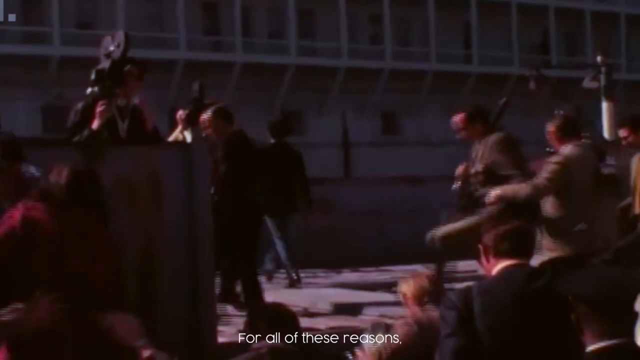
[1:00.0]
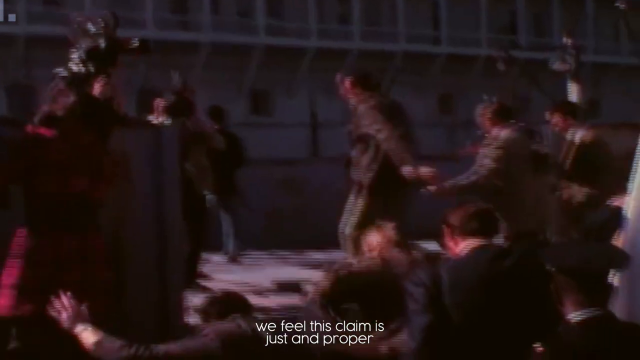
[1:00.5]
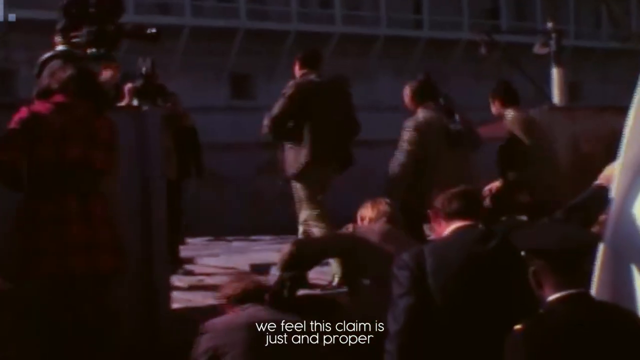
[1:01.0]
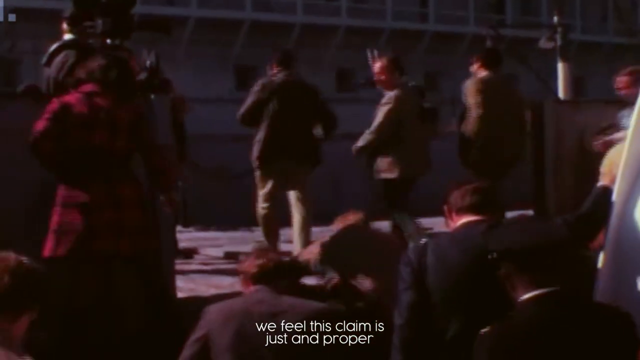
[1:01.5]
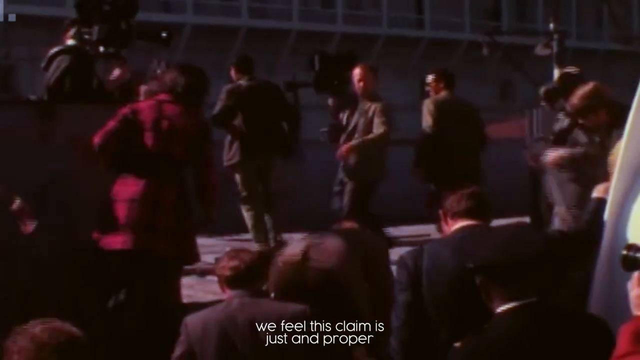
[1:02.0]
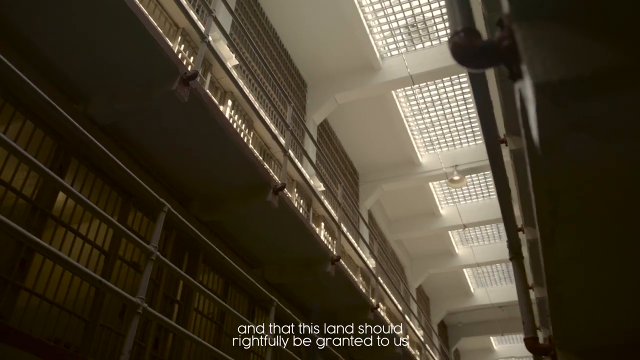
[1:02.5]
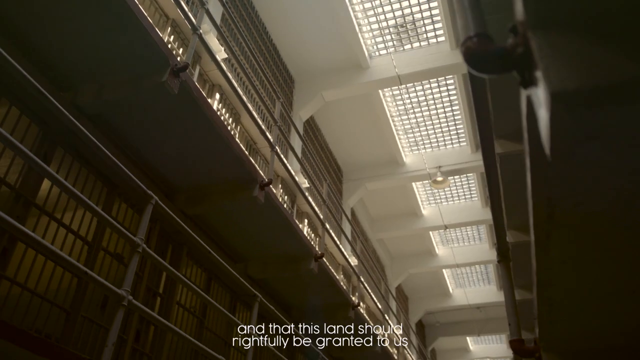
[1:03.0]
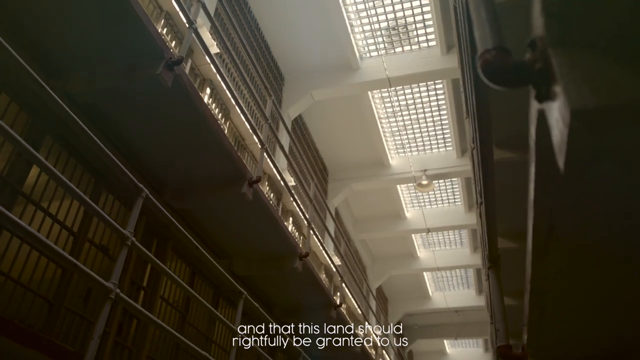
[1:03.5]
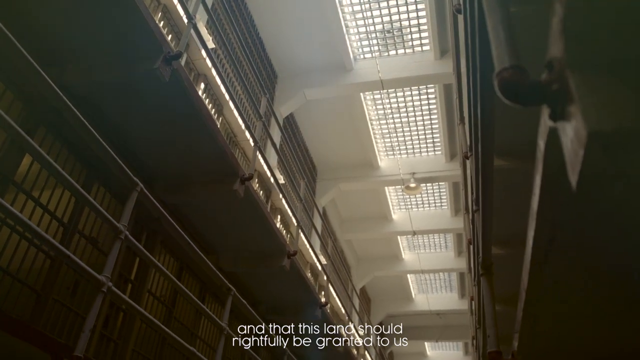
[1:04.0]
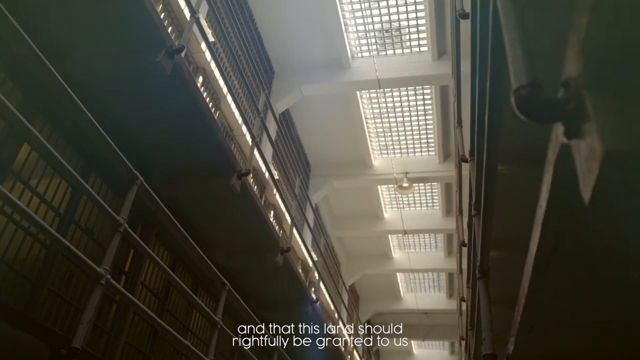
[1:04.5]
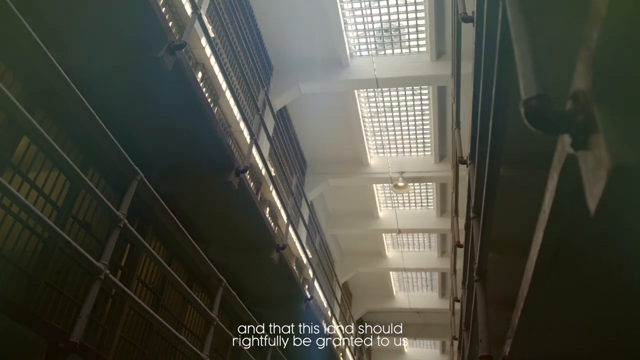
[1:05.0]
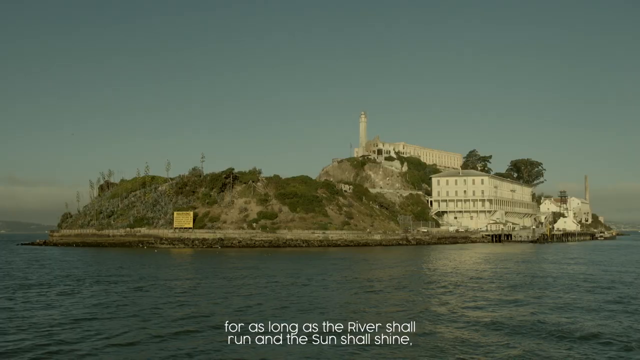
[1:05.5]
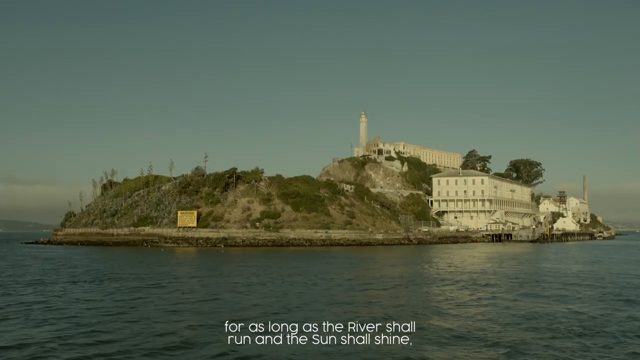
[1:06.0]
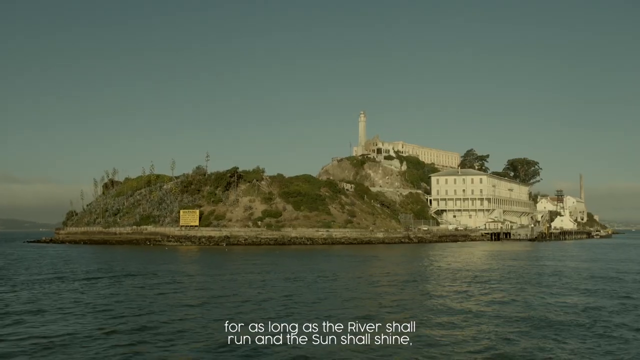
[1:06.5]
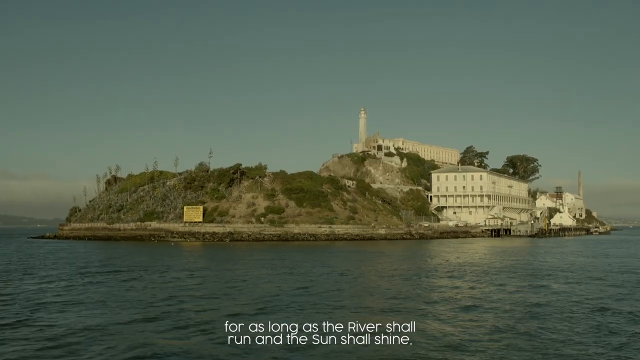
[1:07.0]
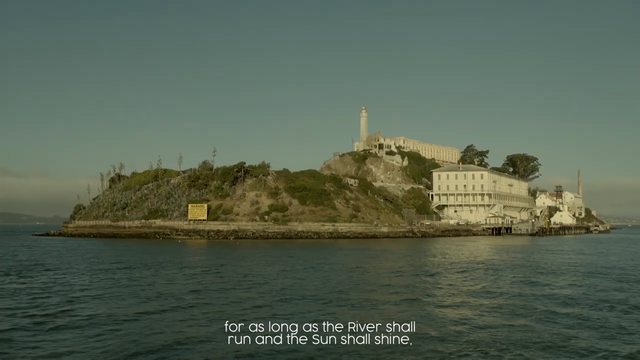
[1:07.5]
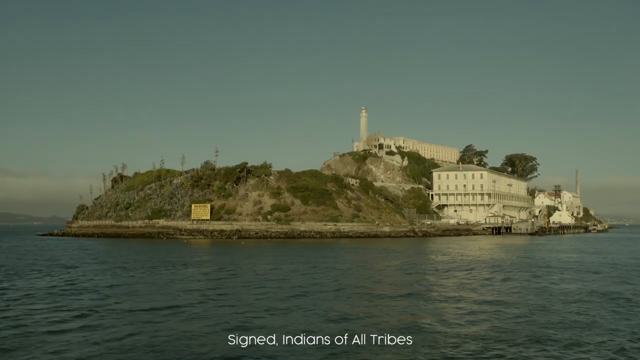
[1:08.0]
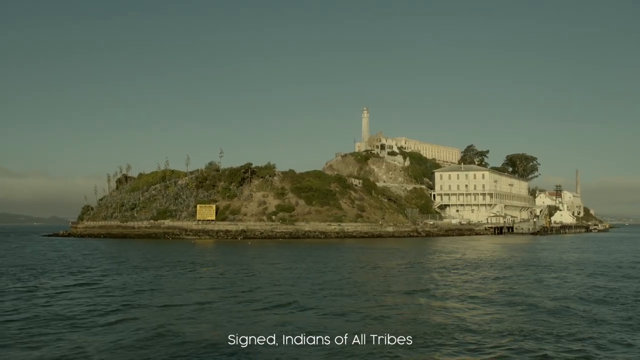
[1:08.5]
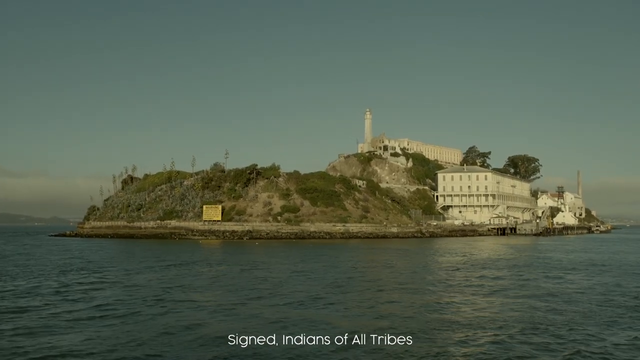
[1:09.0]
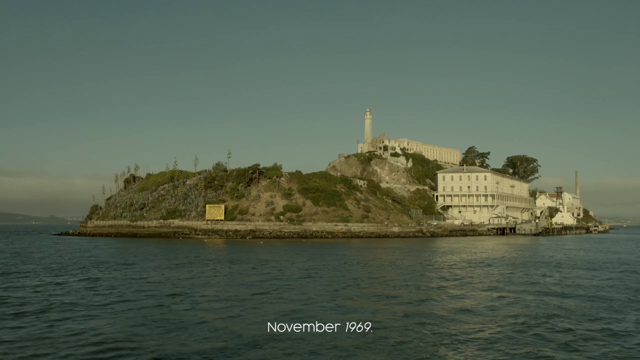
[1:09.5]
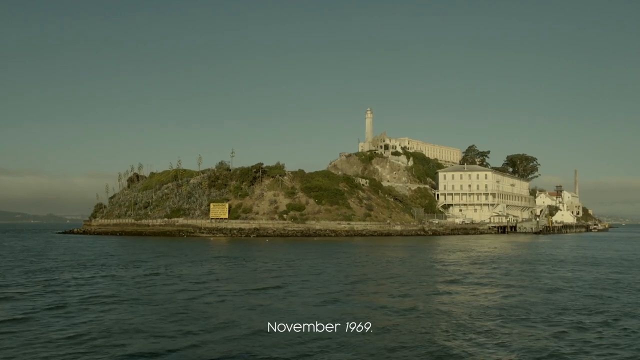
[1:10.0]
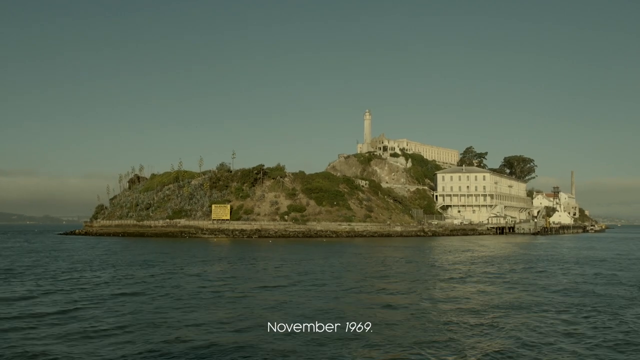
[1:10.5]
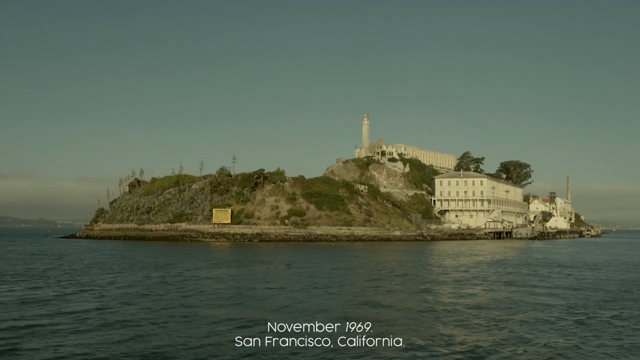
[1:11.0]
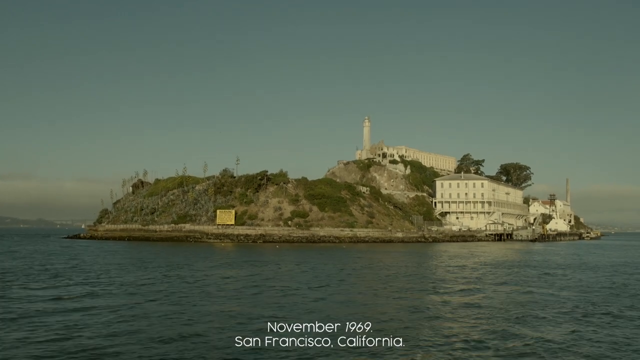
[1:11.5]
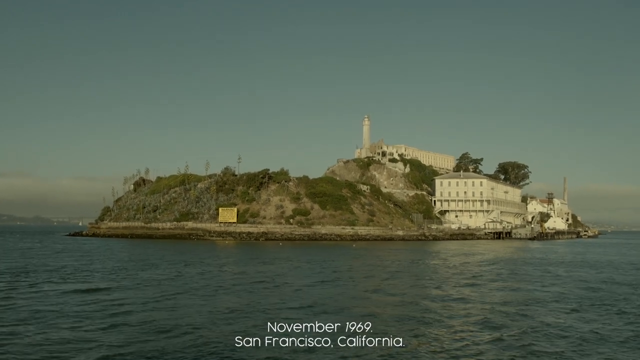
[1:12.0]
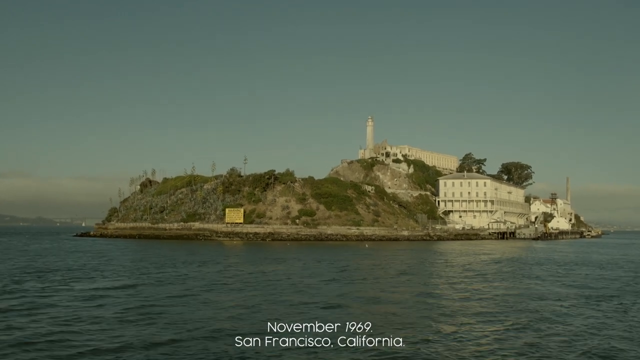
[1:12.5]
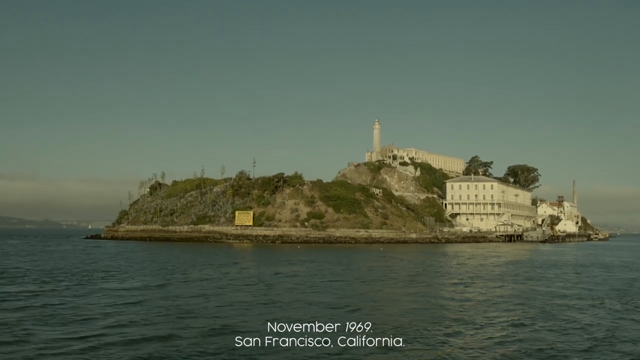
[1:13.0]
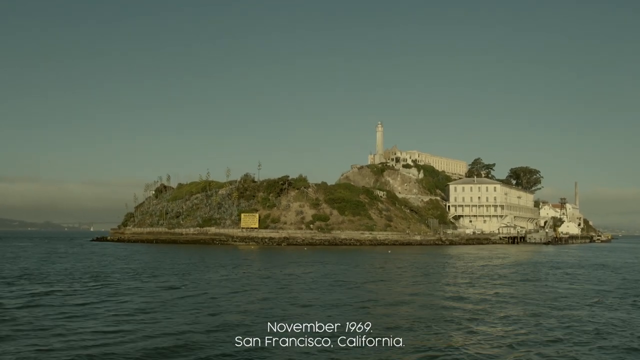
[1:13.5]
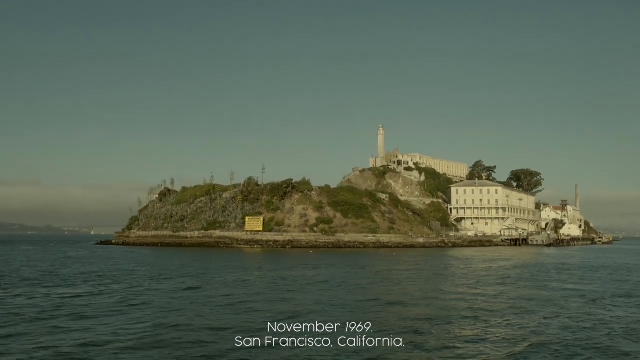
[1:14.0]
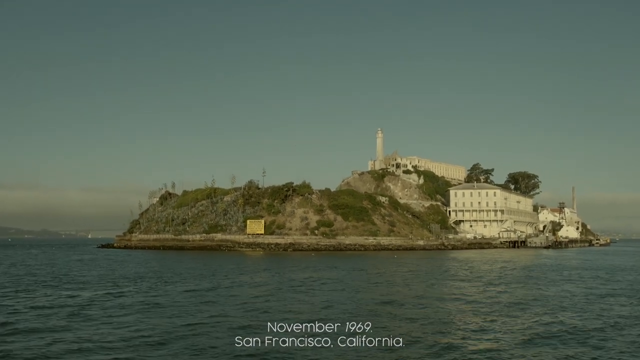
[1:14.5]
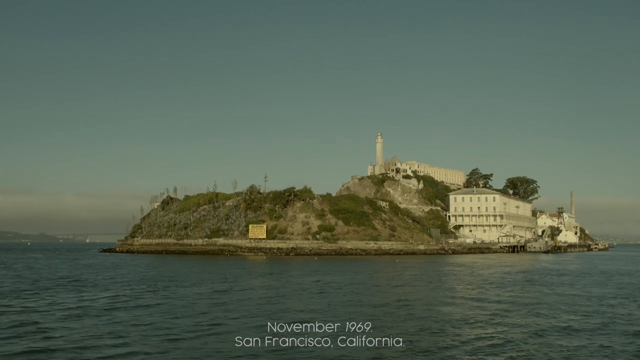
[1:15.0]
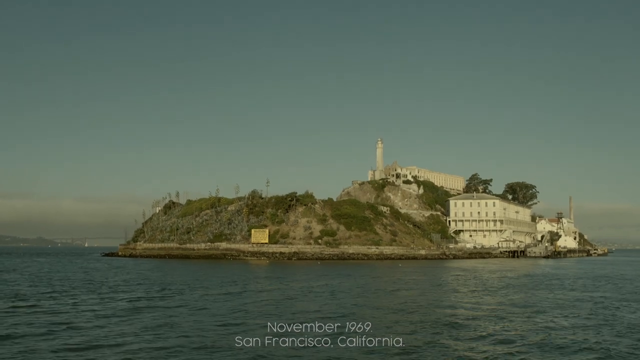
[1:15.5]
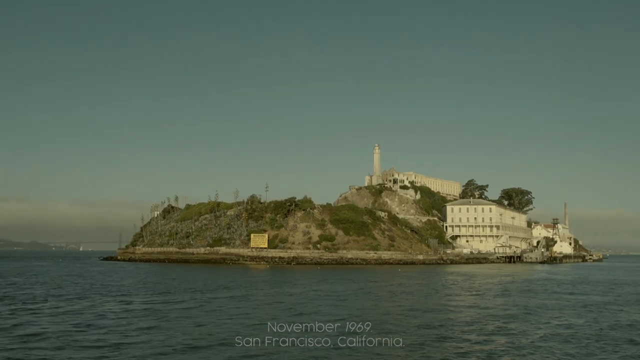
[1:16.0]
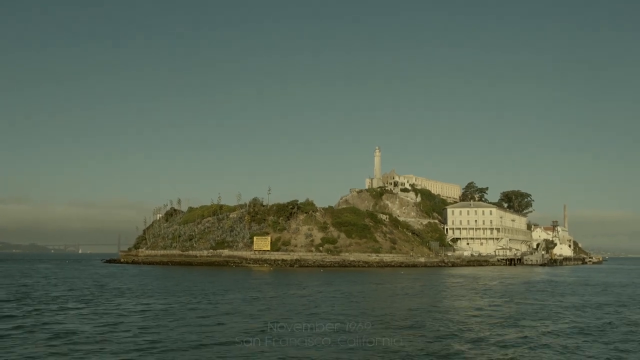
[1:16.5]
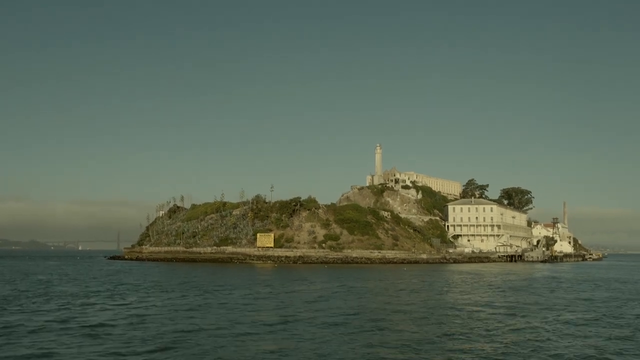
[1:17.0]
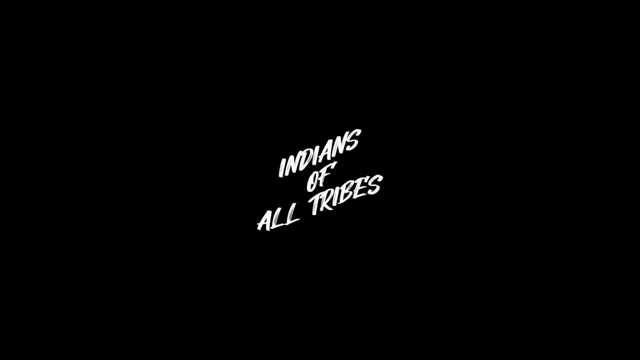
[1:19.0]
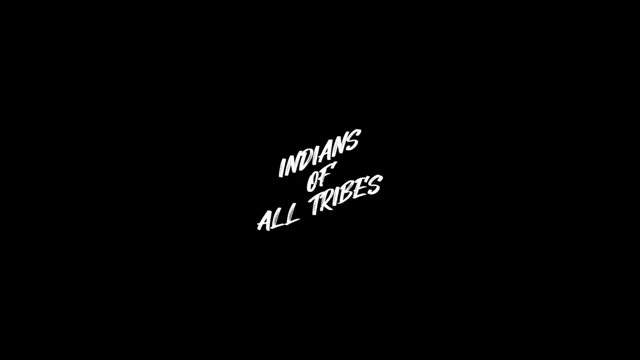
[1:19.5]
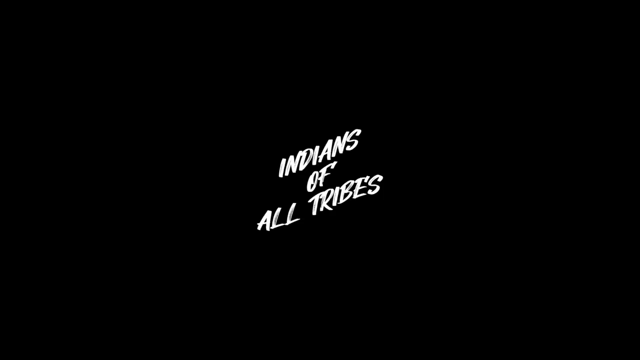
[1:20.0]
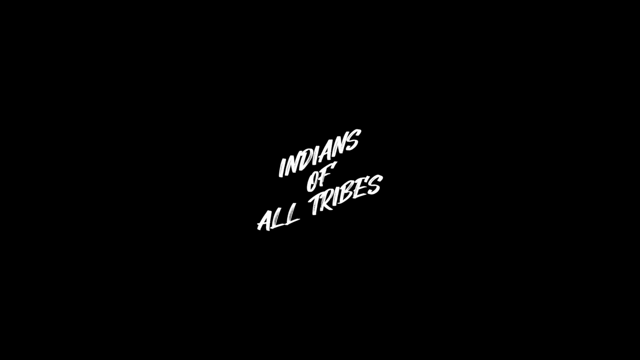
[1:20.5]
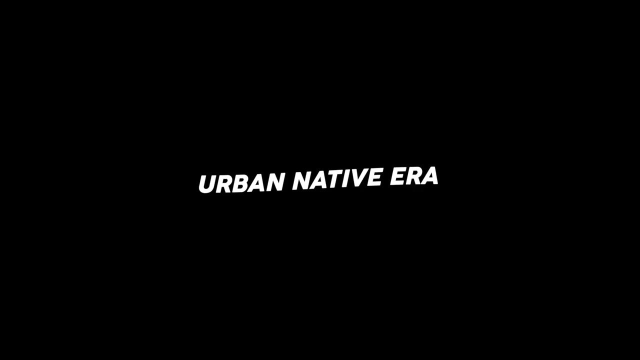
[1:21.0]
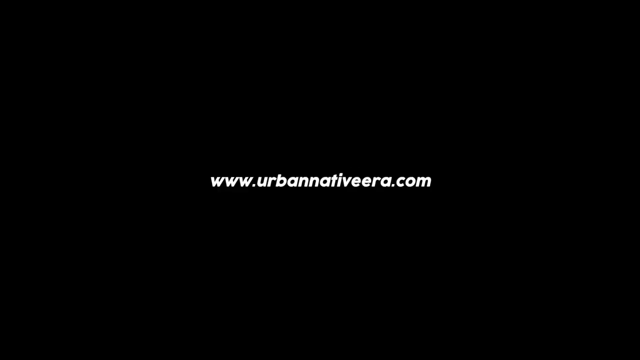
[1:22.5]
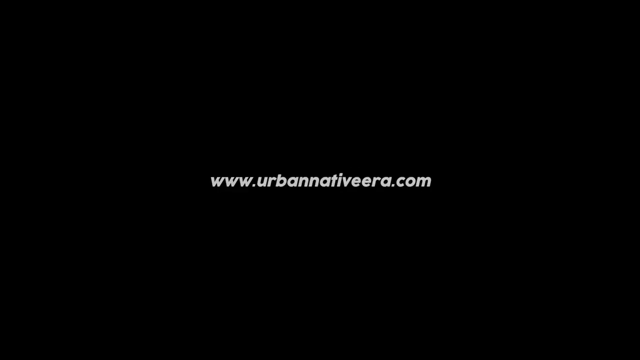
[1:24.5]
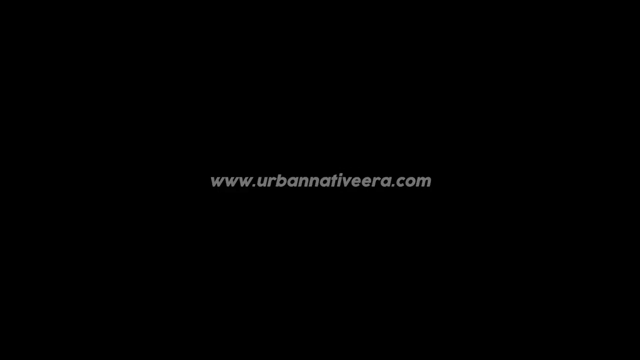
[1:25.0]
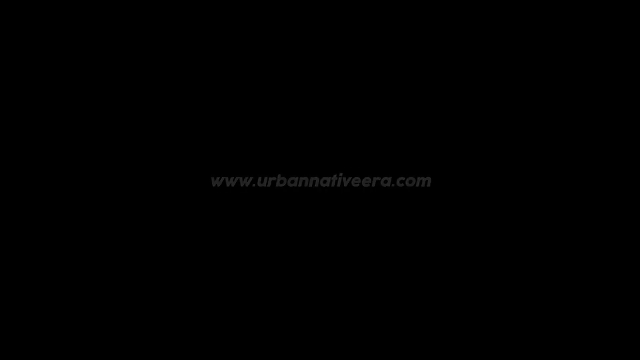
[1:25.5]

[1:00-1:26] A group of people walks upward from the bottom right to the top left, including men in suits of brownish, black and other colors. The scene changes to the camera focused on the rooftop, with handlebars and prison doors on the left. At the top, the roof looks white, with more of the gated roof ceilings. The camera moves slightly to the left, and the scene changes to a shot of the camera sort of moving backwards while keeping its focus on the buildings and land. The land is mostly grass and greenery on the left-hand side, with white buildings on the right-hand side, a large body of water across the bottom portion, and a blue, slightly grayish sky in the background at the top half. As the camera moves backwards away from the island, white subtitles at the bottom read "November, 1969". The screen goes black, and text appears diagonally in the middle reading "Indians of all tribes, Urban Native Era", followed by a website, "www.urbannativeera.com".